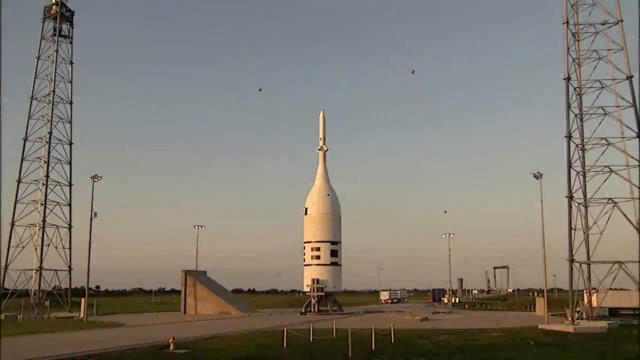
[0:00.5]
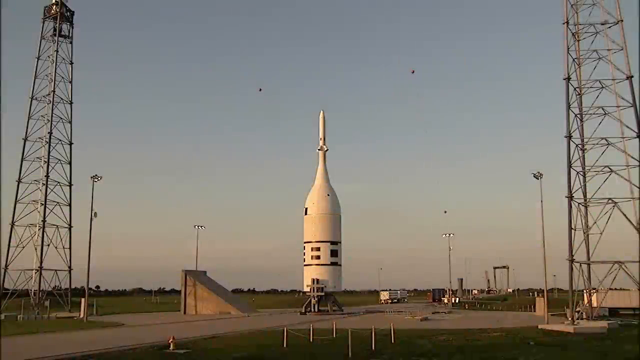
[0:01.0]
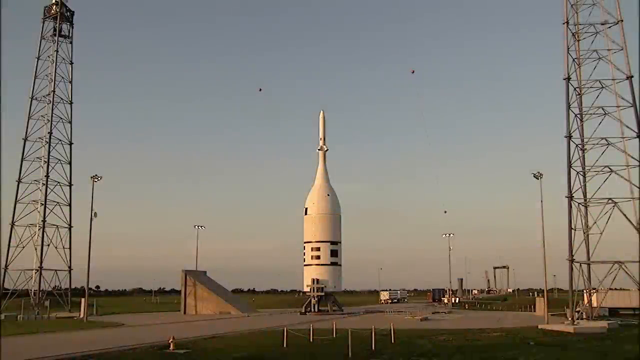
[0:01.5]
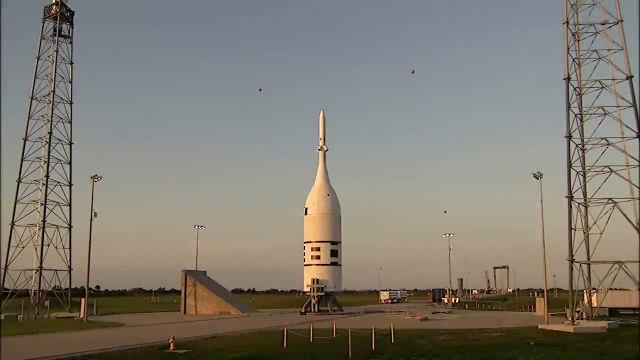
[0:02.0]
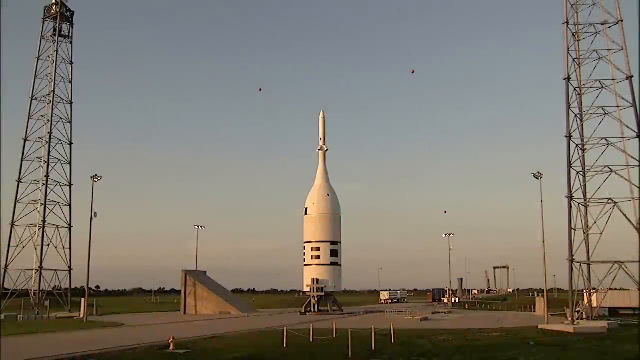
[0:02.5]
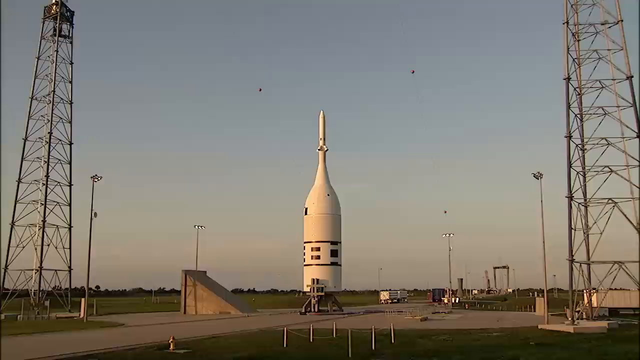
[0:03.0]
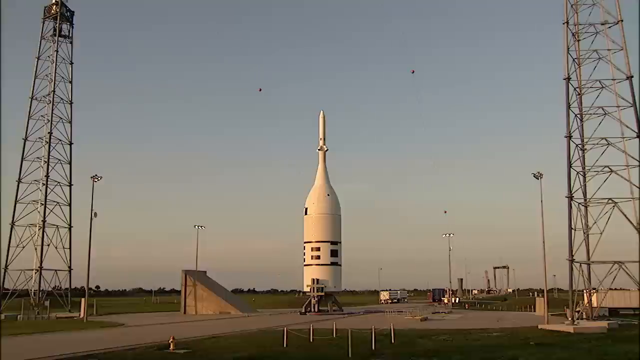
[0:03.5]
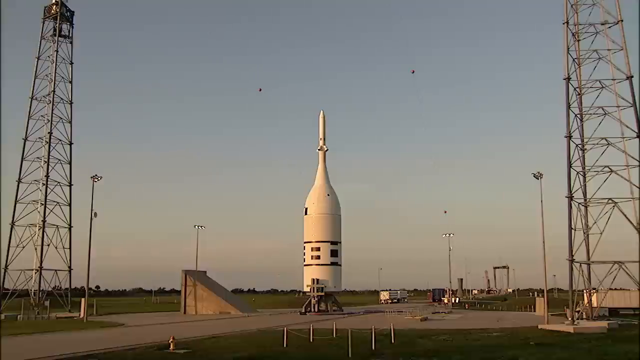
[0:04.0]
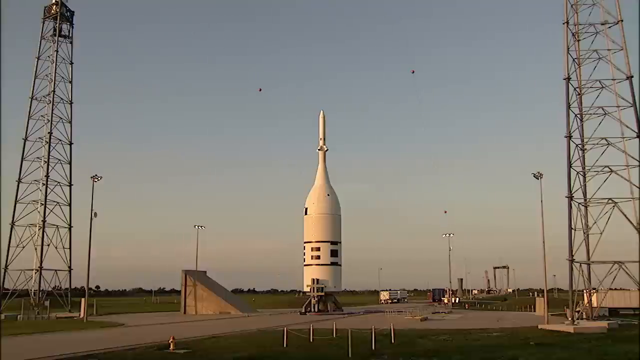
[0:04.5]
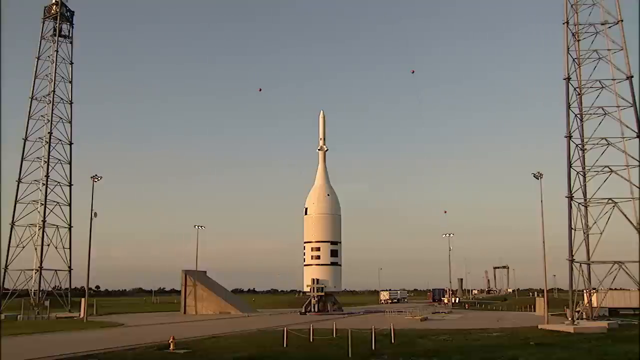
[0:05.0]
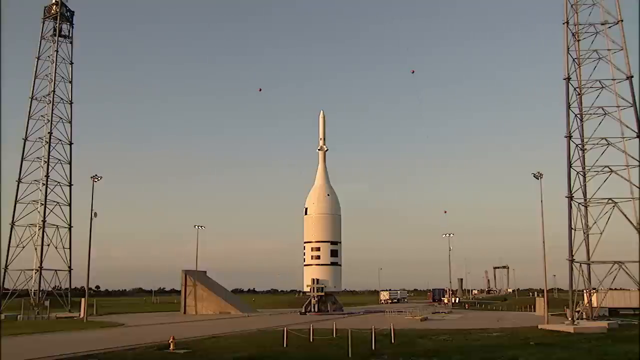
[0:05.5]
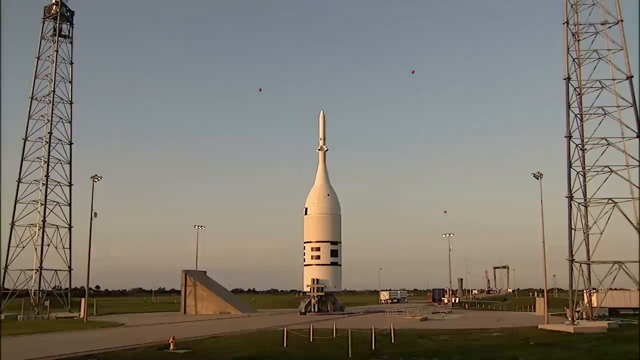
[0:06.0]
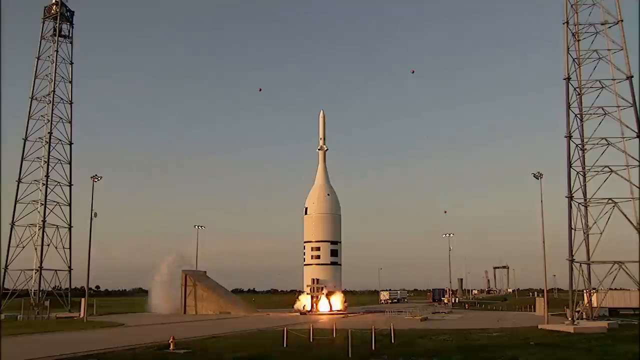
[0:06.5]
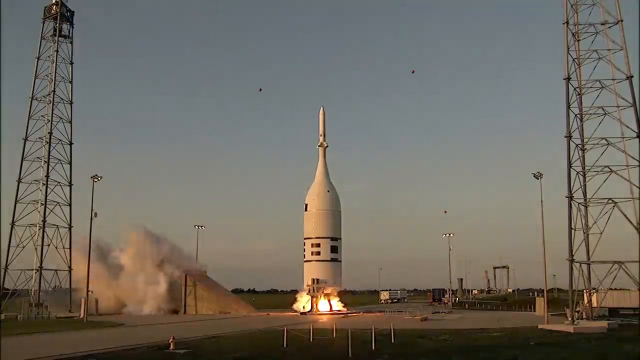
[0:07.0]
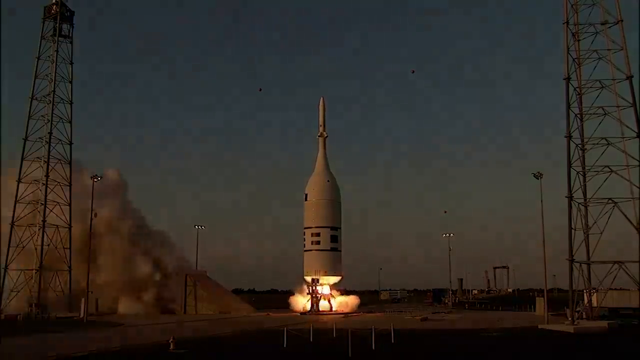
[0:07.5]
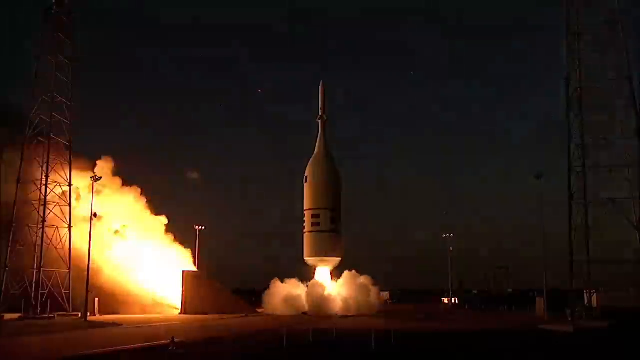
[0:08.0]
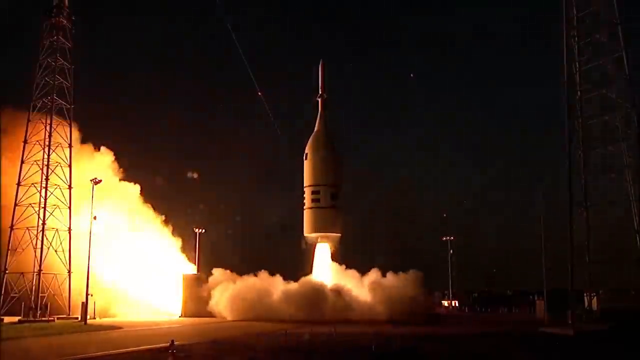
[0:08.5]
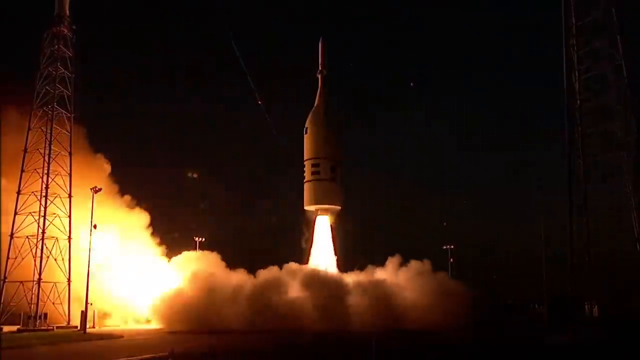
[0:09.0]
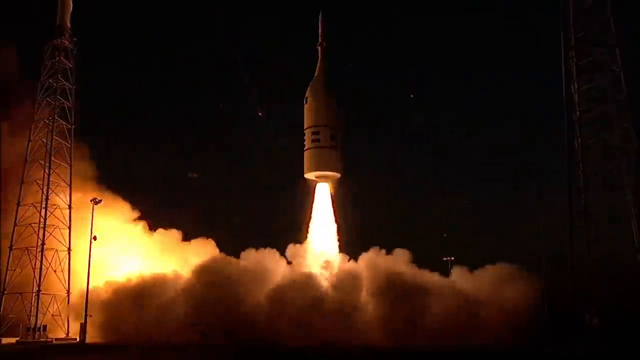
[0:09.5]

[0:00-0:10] A rocket stands in a clearing with a paved area and a couple of towers on either side. It is a daytime scene: the sky overhead is blue, turning kind of grayish at the horizon, with no clouds really visible, and there are green grass fields on either side. Trailers are parked in the back, along with tall lights on lampposts. Flames burst at the bottom of the rocket and it starts to lift off. The sky then appears to go black, and a huge burst of flame erupts underneath the rocket, with another burst of flame on the left side. The flame is bright white, gushing smoke everywhere, and kind of yellow and orange around the edges.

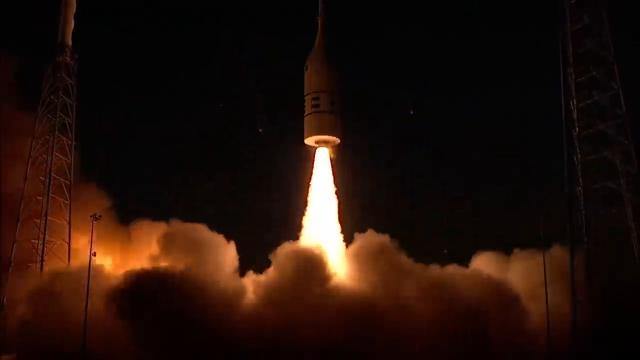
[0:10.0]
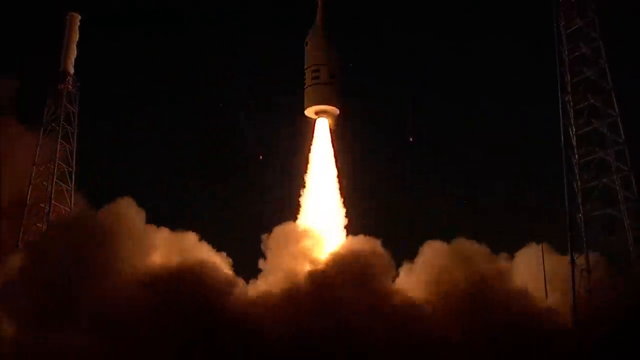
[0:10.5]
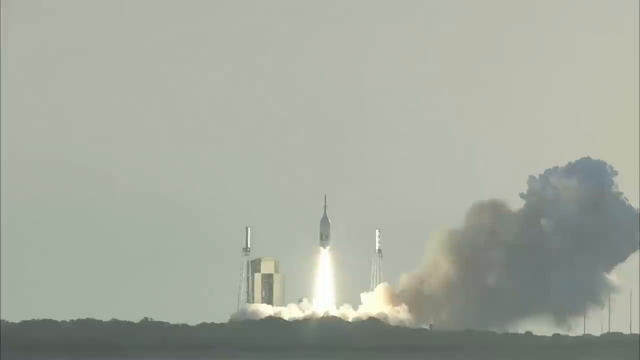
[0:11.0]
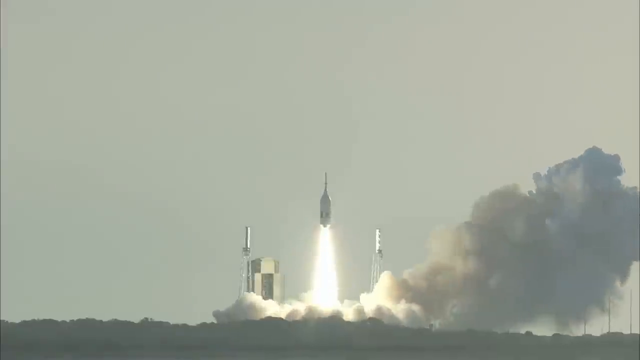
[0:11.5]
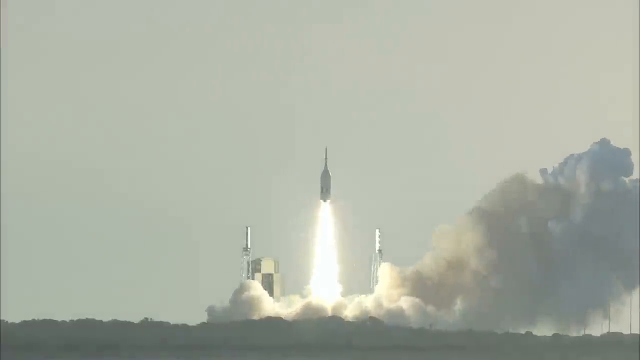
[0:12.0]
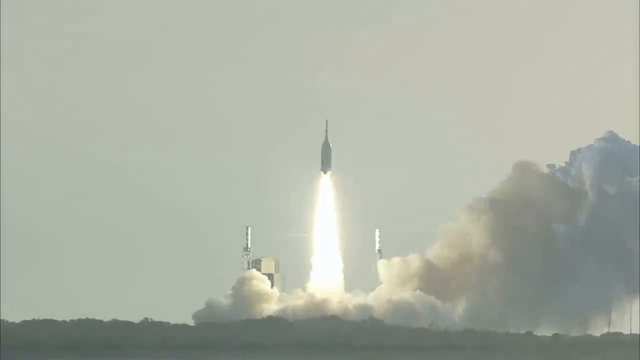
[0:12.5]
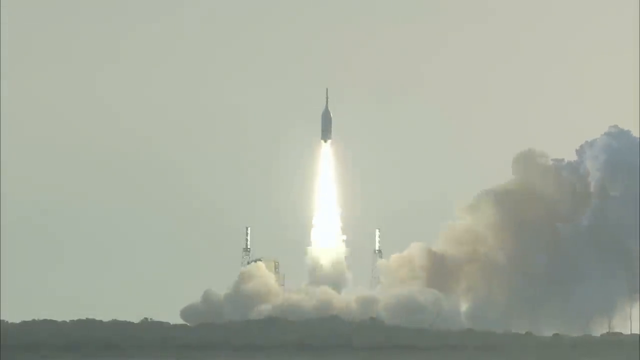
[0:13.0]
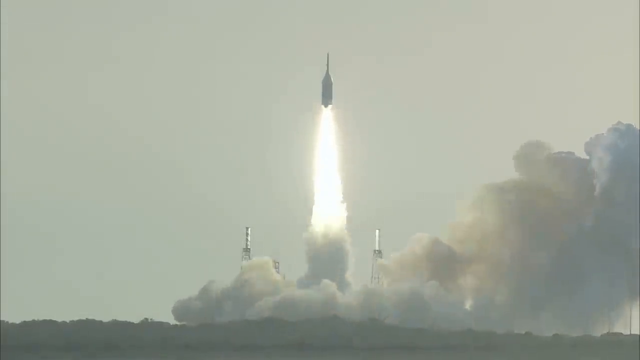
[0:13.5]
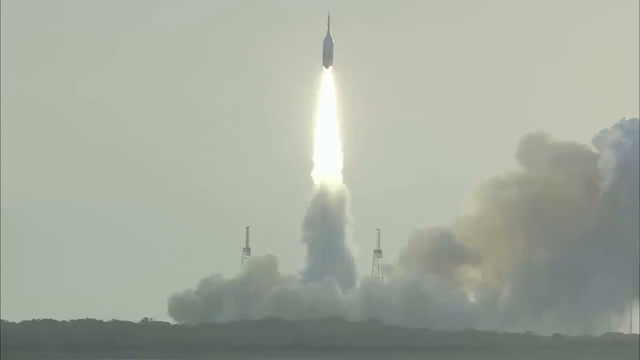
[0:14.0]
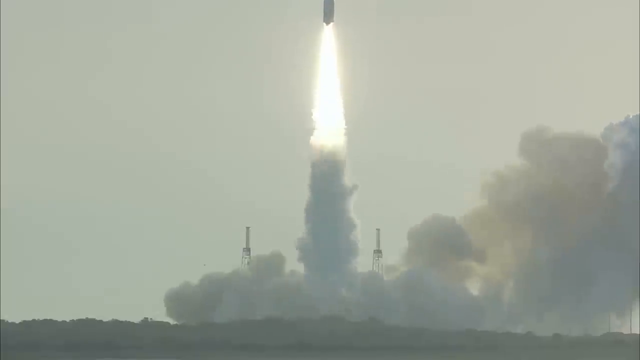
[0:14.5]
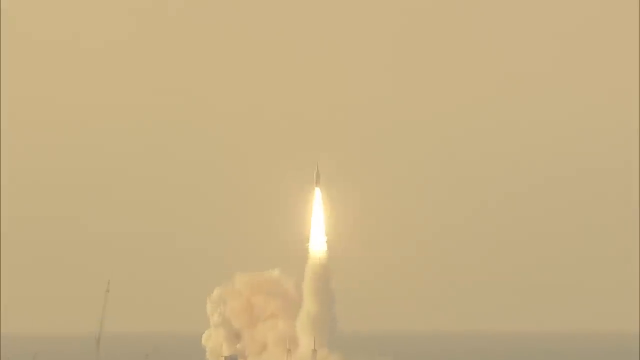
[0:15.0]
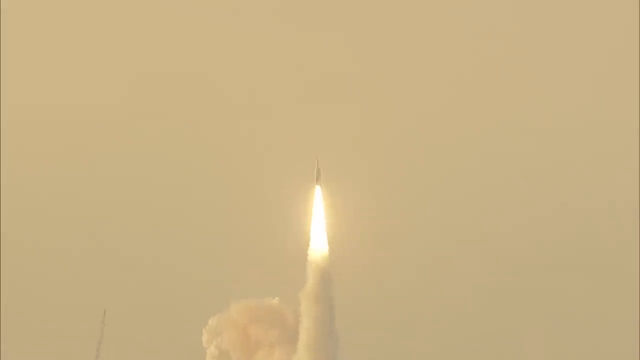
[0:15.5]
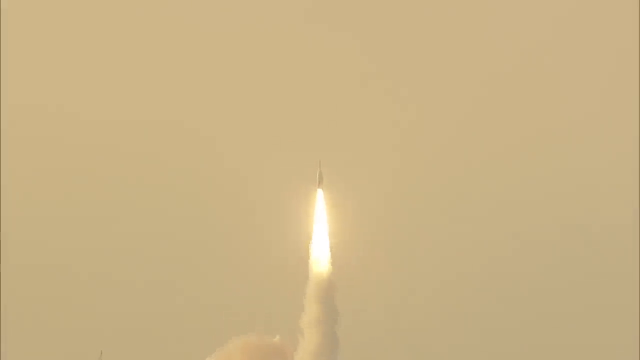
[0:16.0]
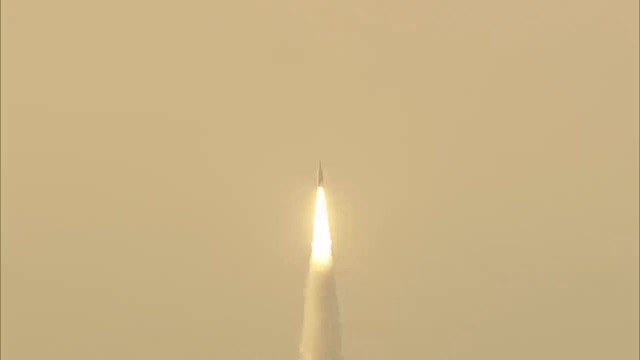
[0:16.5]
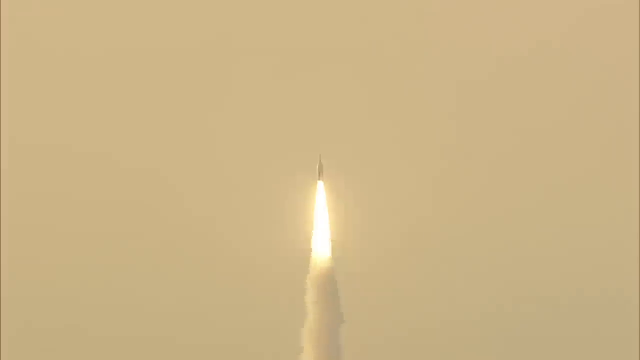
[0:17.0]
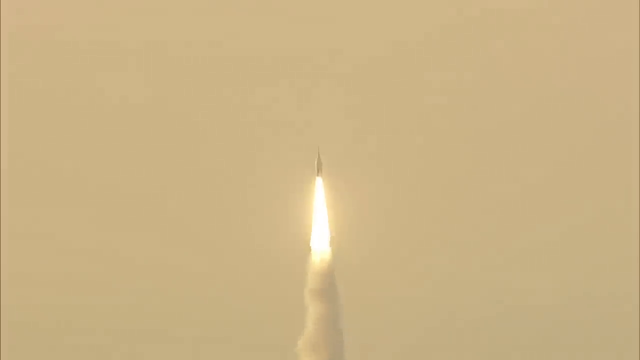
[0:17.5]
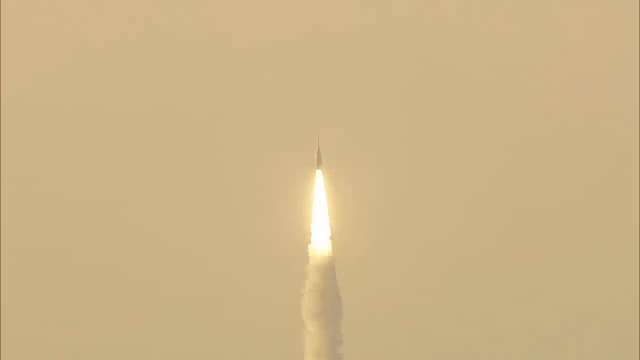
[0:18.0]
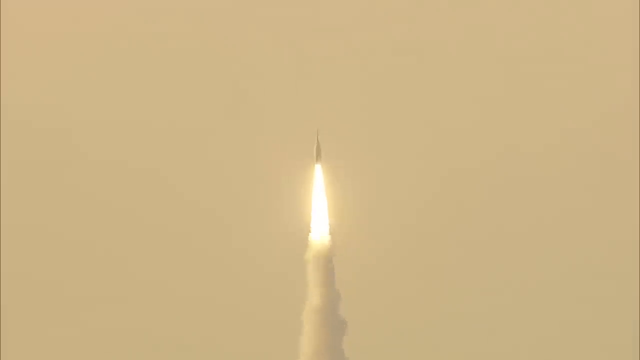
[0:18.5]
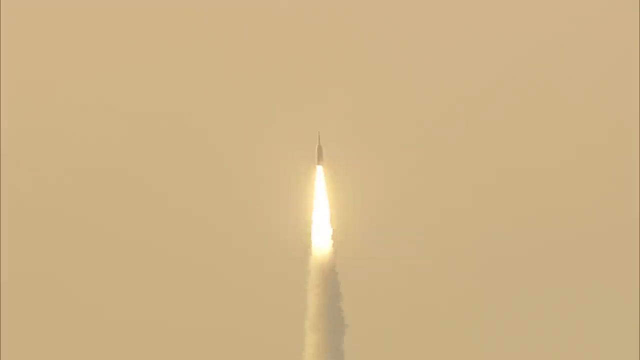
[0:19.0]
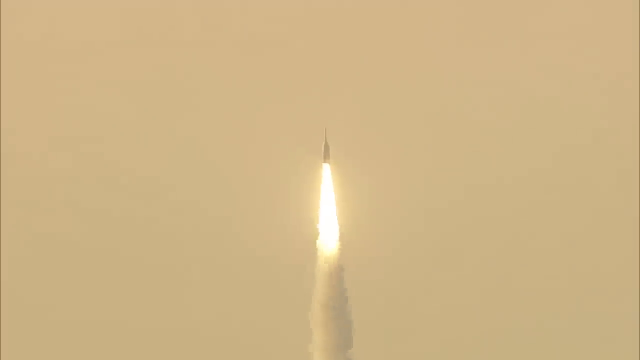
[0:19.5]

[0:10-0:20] In a close-up shot, the lifting-off rocket looks like it is surrounded by darkness, almost like nighttime. A bright orange and white flame shoots out of the bottom, and smoke billows all around on the ground. A couple of towers, looking like radio towers, are visible on either side. The rocket is white with a couple of black stripes and black rectangles on the side; it is cylinder-shaped but becomes narrow and forms a point at the top. In a faraway shot, the sky around the rocket is kind of grayish, smoke billows around it, and the rocket looks much smaller. From another angle the rocket looks tiny in the sky as it keeps going up, with a giant flame underneath it and a cloud of smoke billowing beneath the flame.